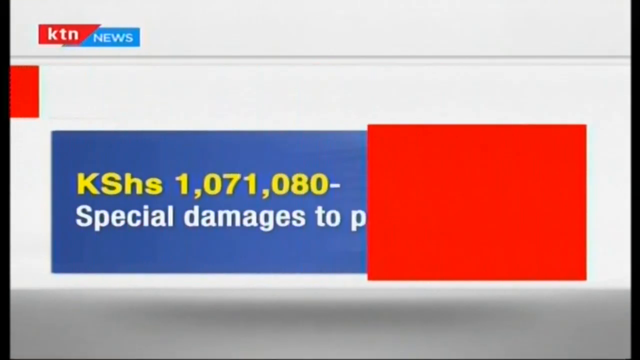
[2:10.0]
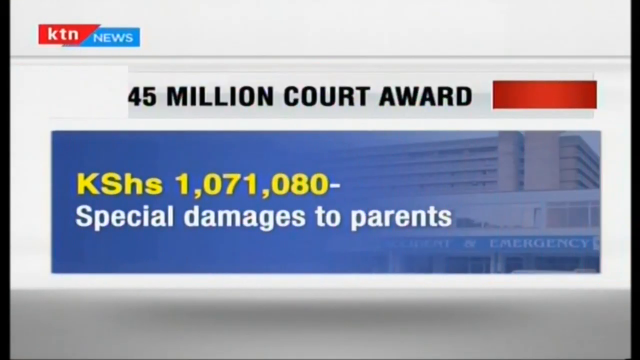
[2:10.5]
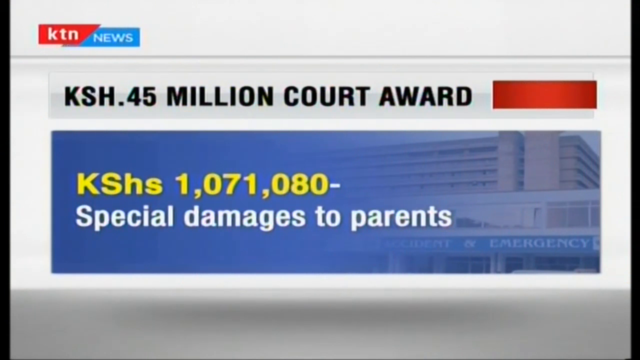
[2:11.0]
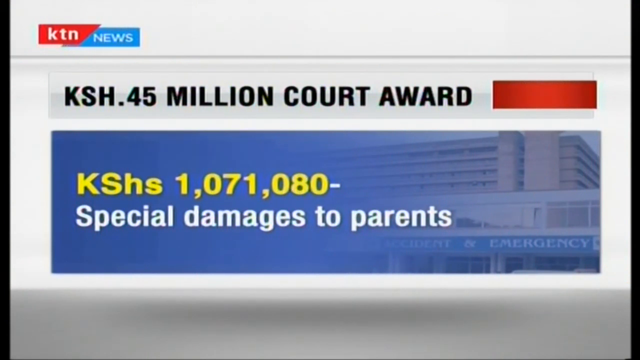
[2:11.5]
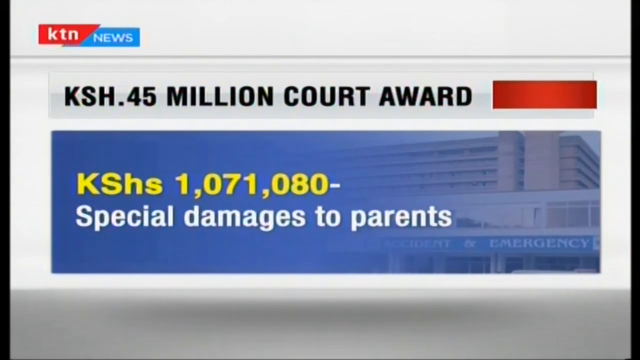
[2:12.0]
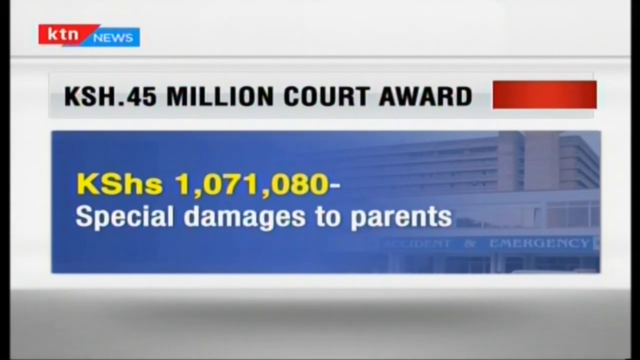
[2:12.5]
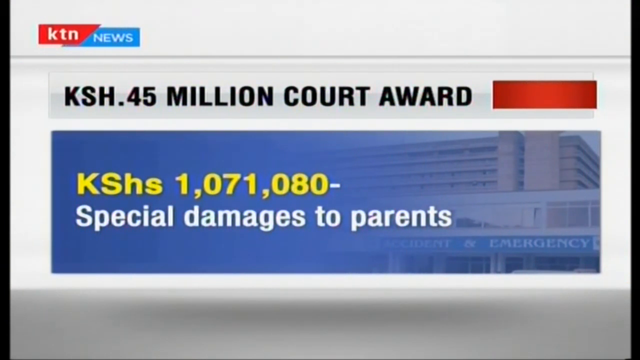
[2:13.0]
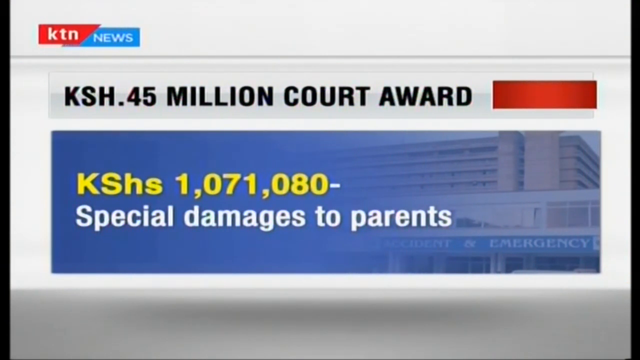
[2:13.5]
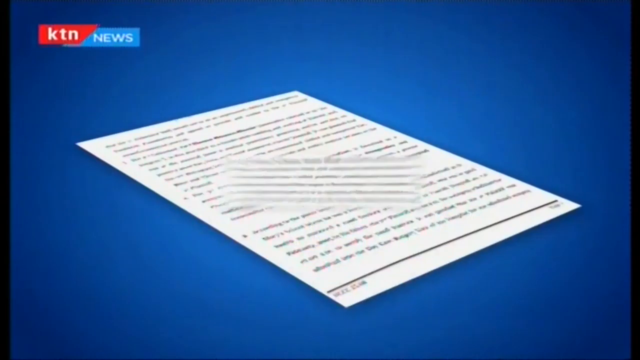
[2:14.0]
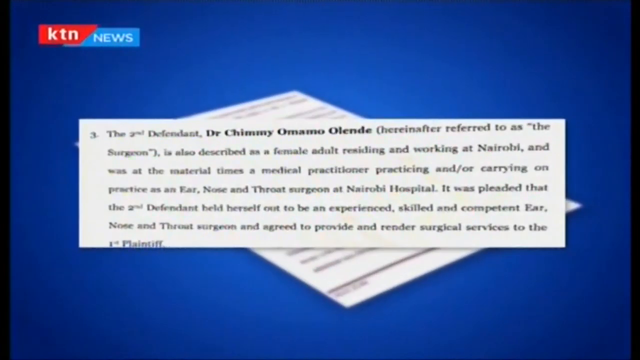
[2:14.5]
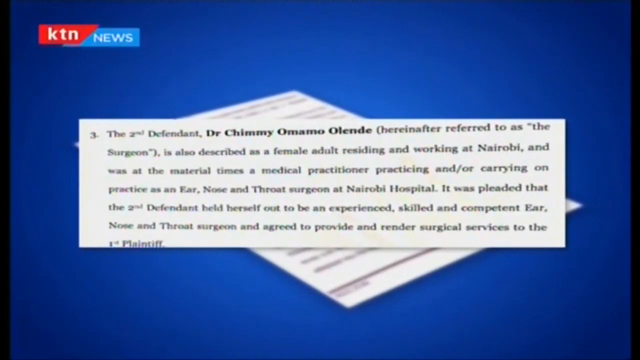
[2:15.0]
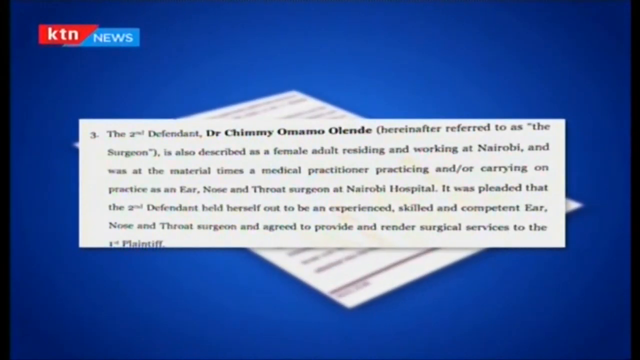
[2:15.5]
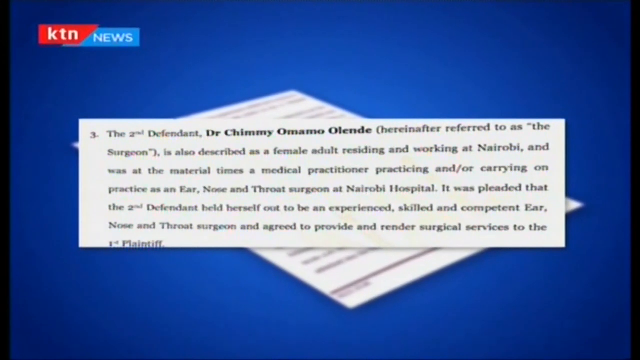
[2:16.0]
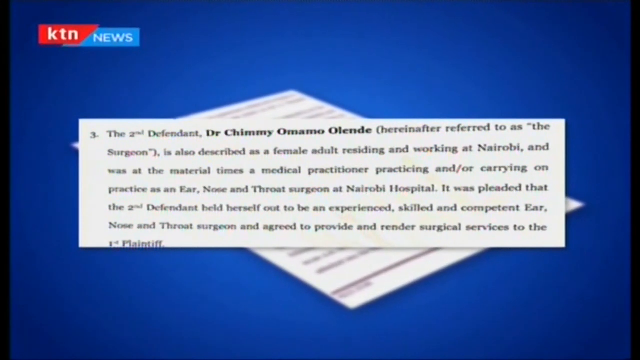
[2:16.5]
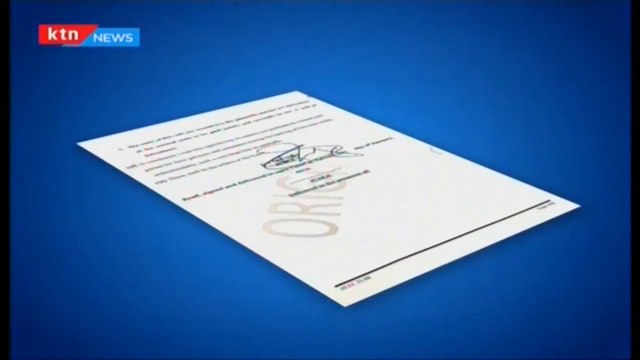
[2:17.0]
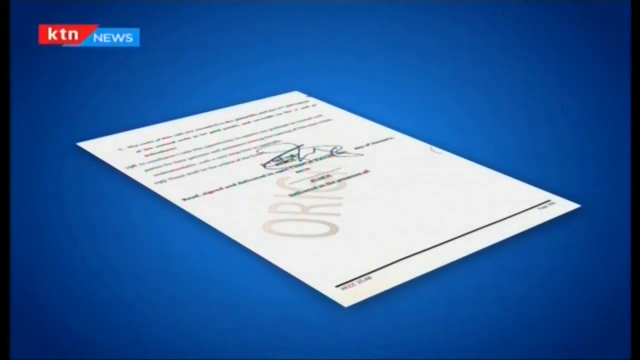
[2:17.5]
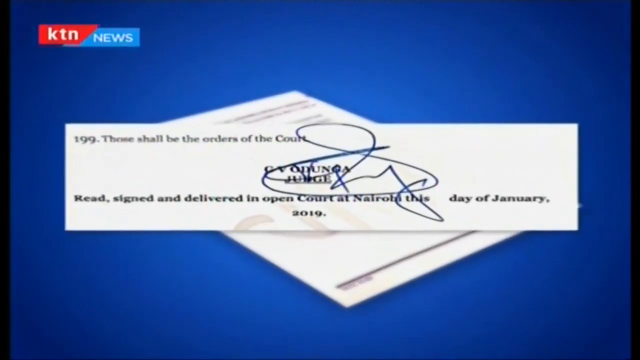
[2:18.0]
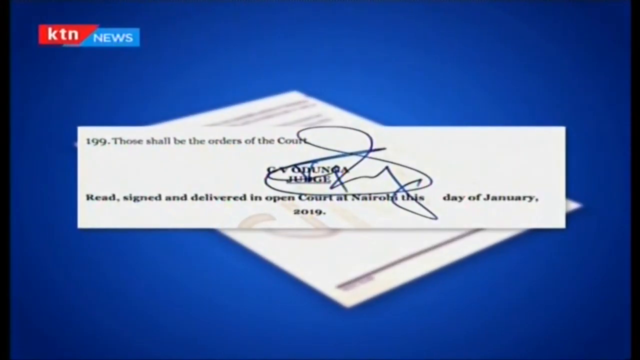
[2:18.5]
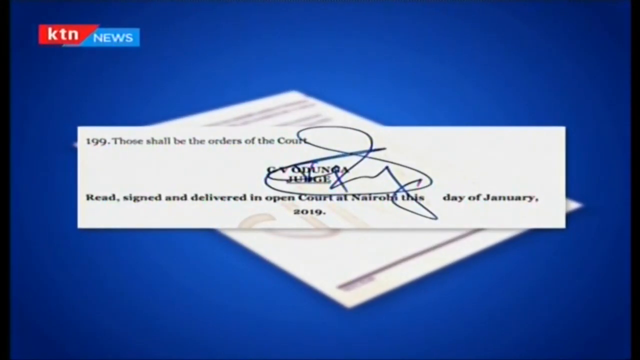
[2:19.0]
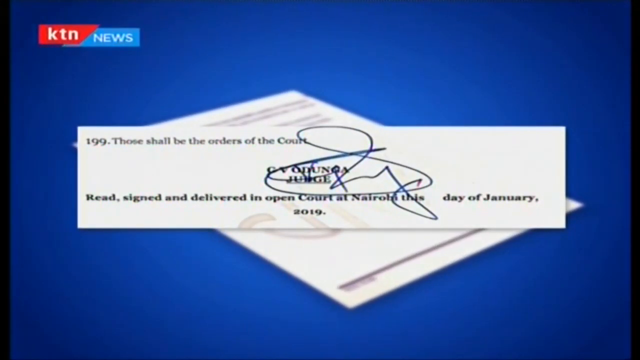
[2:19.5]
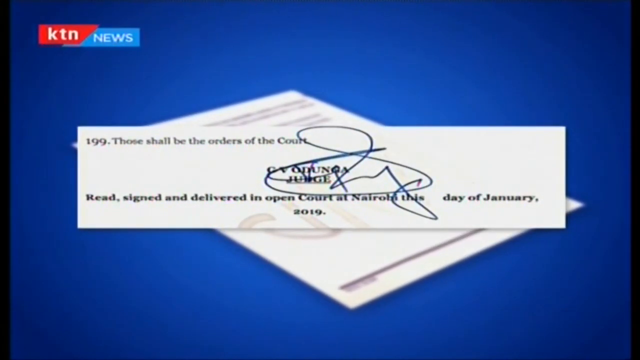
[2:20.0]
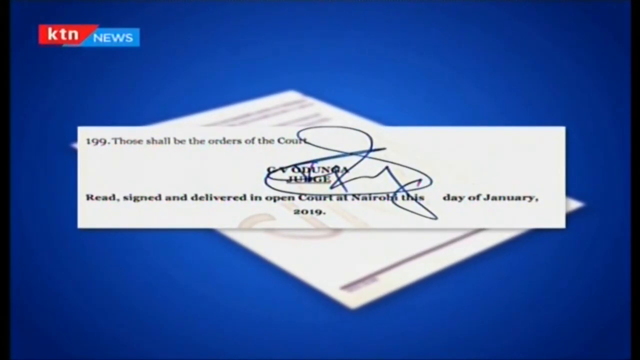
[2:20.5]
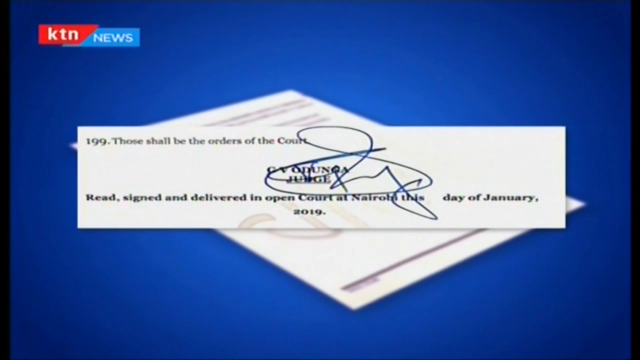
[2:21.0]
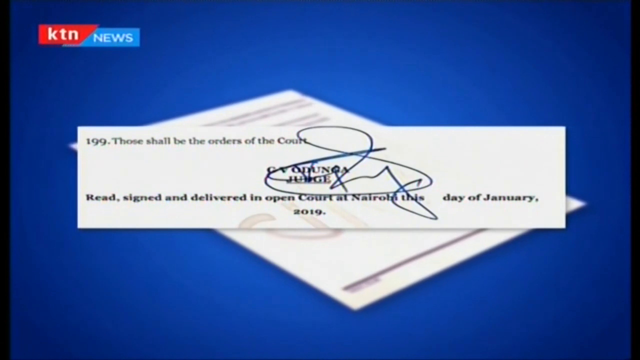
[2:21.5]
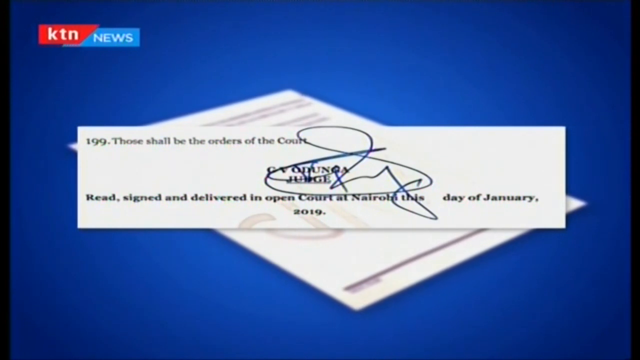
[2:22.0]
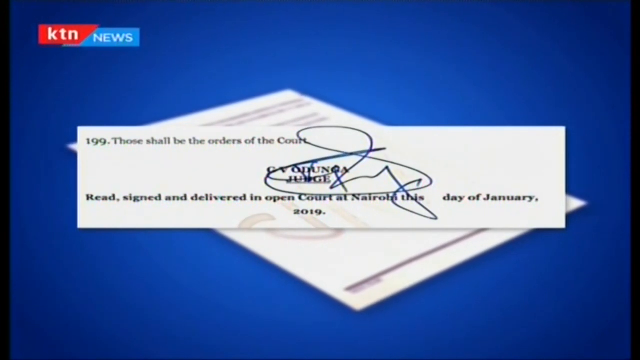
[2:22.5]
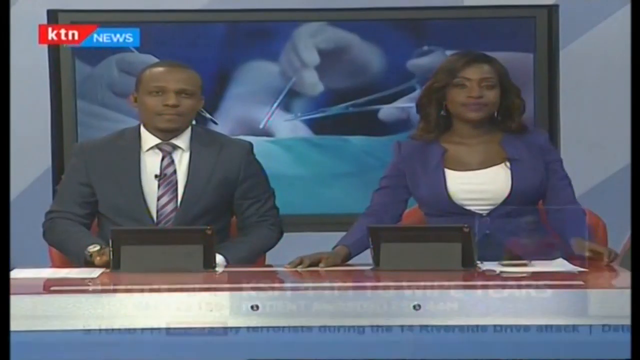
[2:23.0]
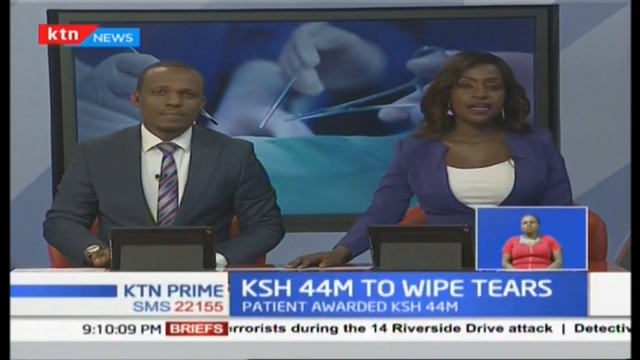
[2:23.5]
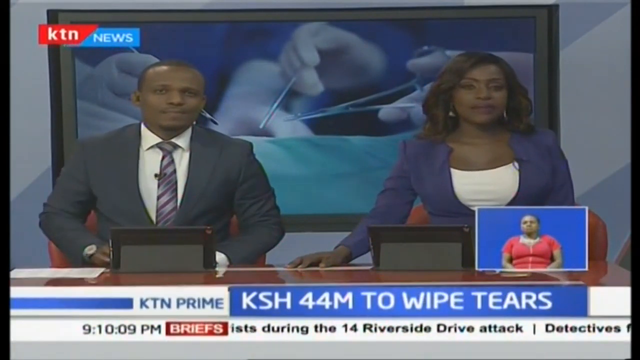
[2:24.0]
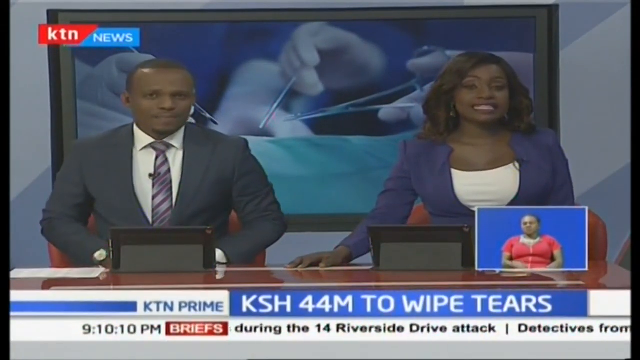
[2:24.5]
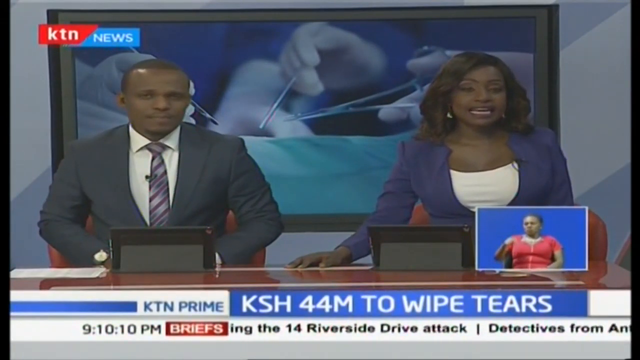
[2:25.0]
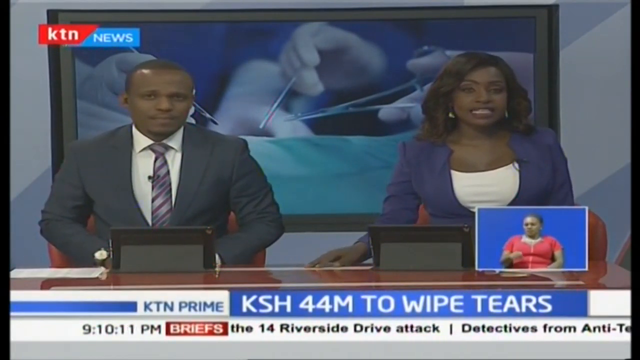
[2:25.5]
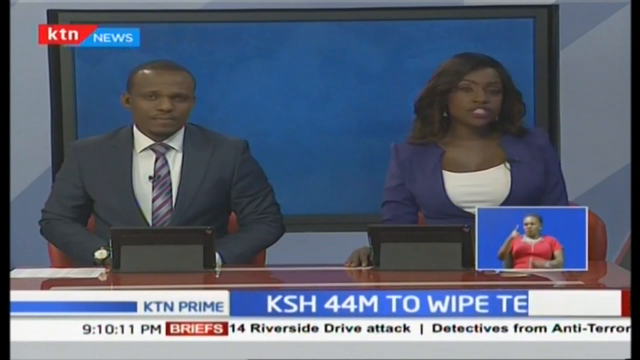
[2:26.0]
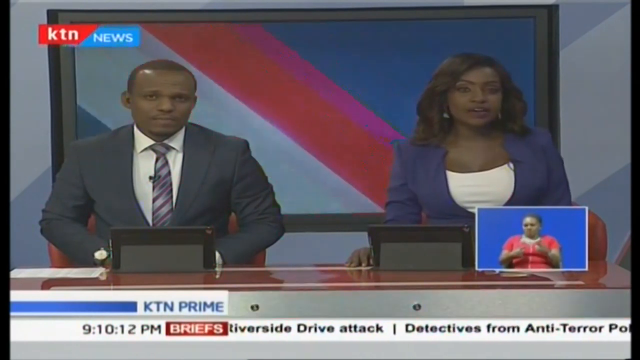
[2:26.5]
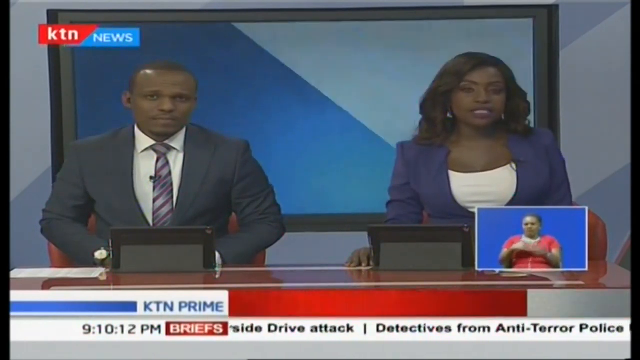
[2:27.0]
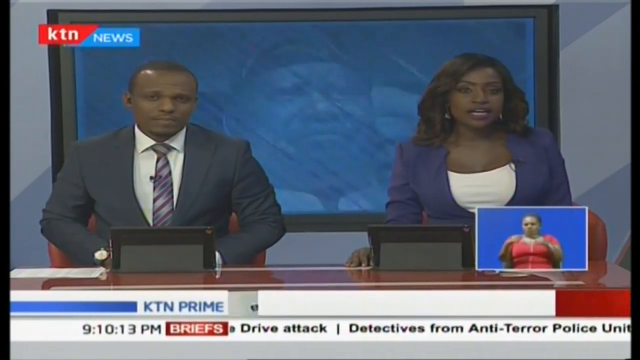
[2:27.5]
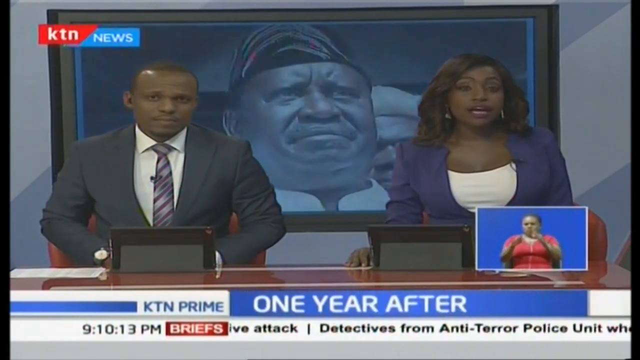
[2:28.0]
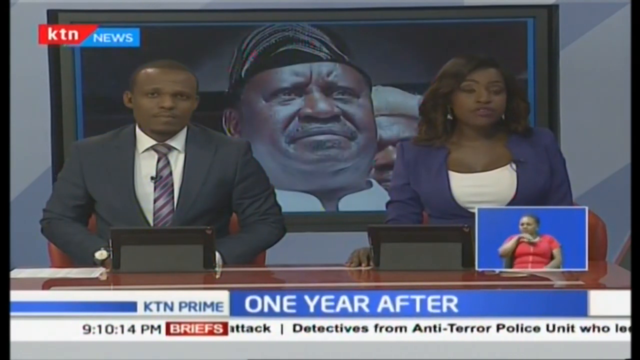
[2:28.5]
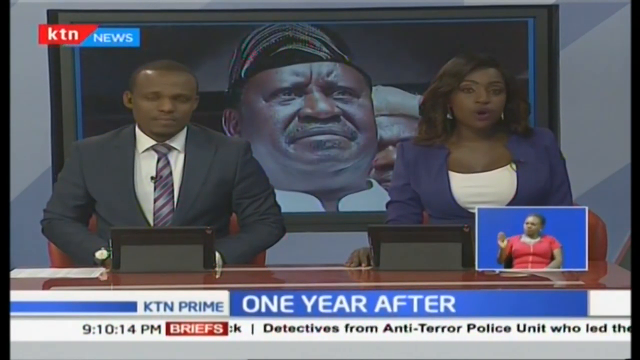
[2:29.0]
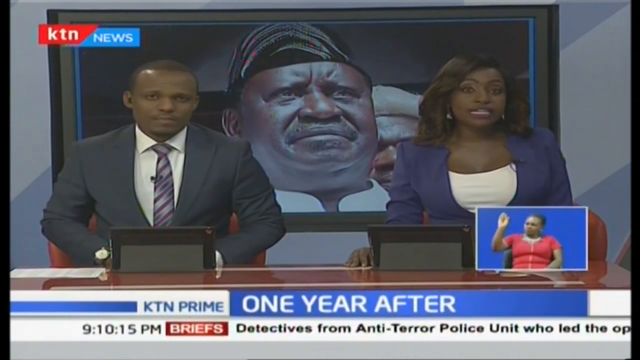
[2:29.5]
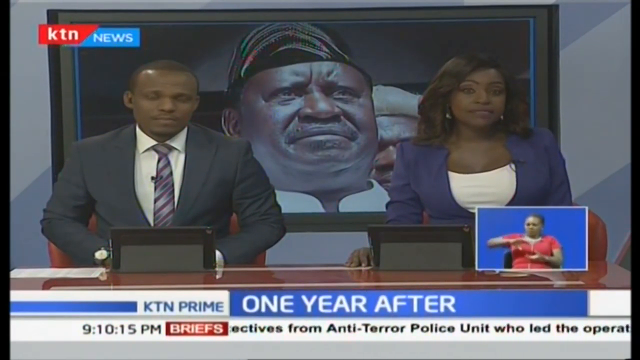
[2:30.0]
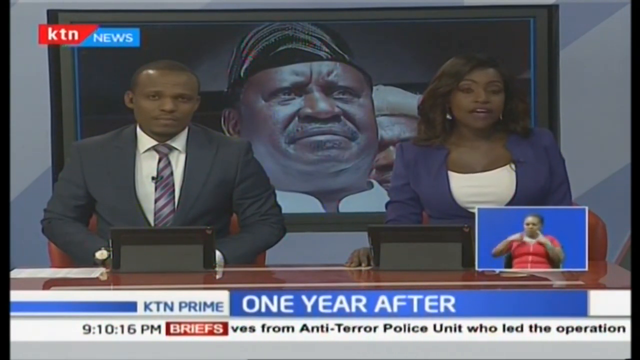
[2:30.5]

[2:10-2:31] A similar white, blue and red infographic, with a hospital in the background of the blue area, shows a special damages award to the parents: 1,071,080 KSHS. Another court document follows on a blue background, with the KTN News logo in the left corner, stating that the third defendant, Dr. Chimney Amano-Alende, is also a female working at Nairobi. This cuts to an image of the court document bearing the judge's signature. Both appear only briefly. The video then cuts back to the two middle-aged African-American newscasters. The black man on the left wears a black suit, a white collared shirt and a purple striped tie, and the woman on the right wears a white shirt with a blue dress jacket. In the background is an image of a surgeon doing work.